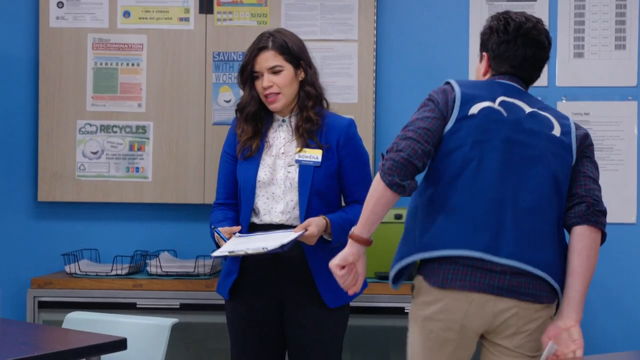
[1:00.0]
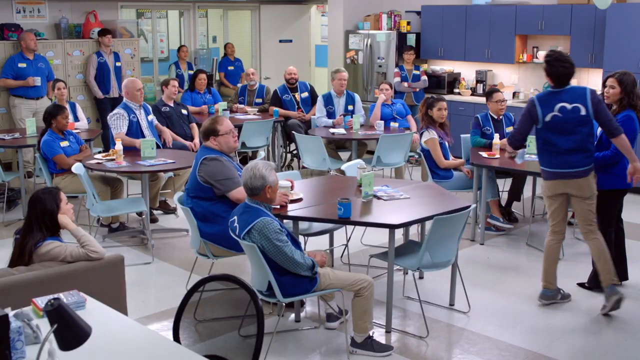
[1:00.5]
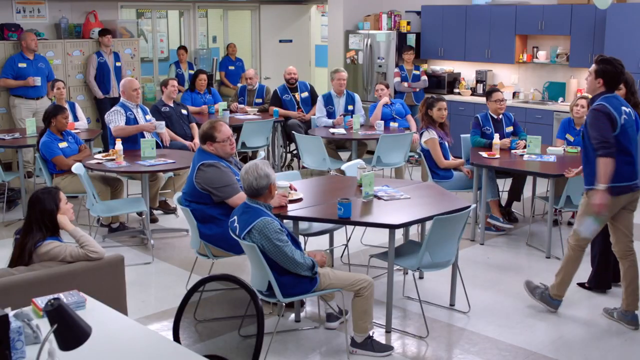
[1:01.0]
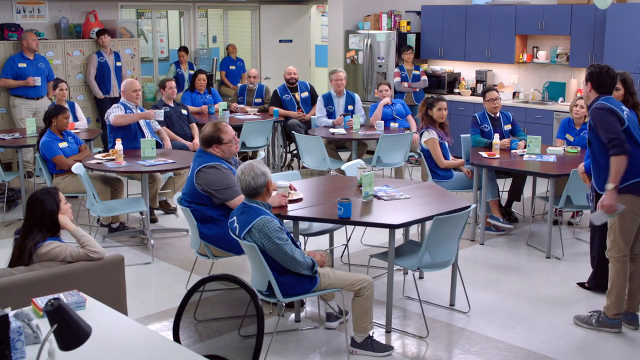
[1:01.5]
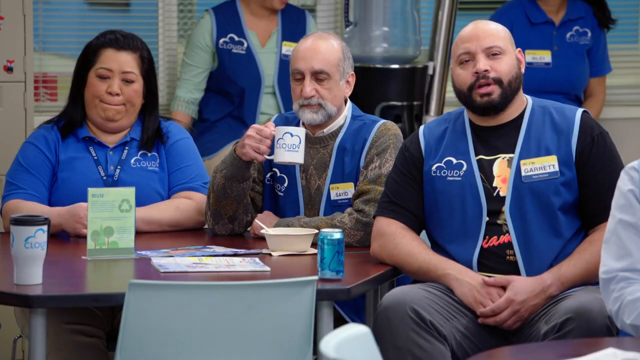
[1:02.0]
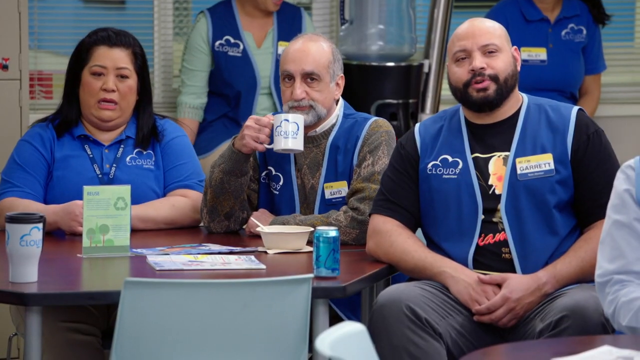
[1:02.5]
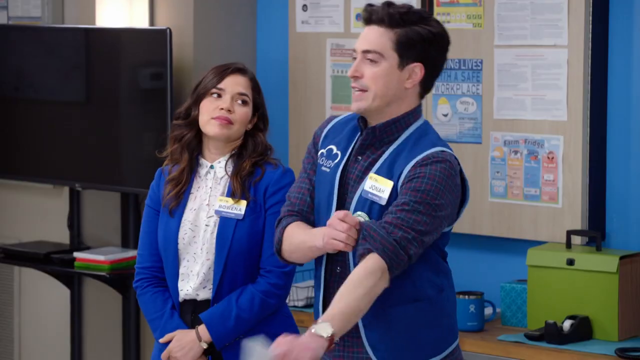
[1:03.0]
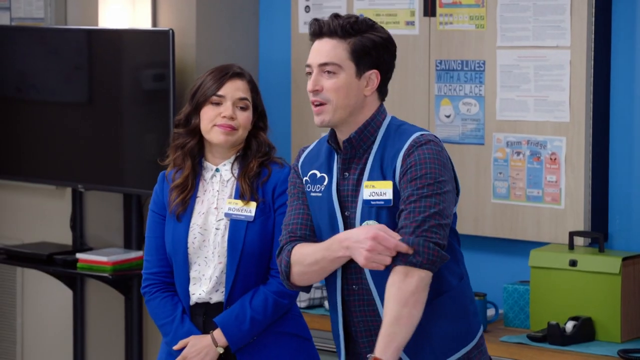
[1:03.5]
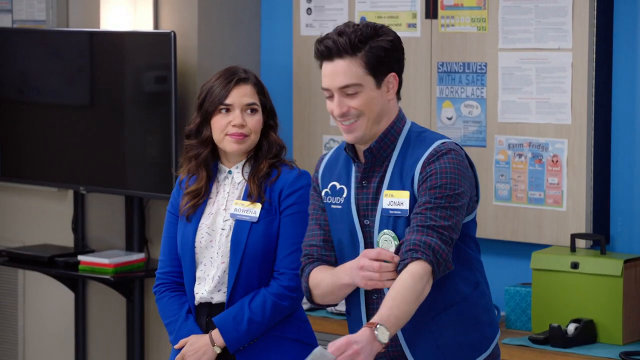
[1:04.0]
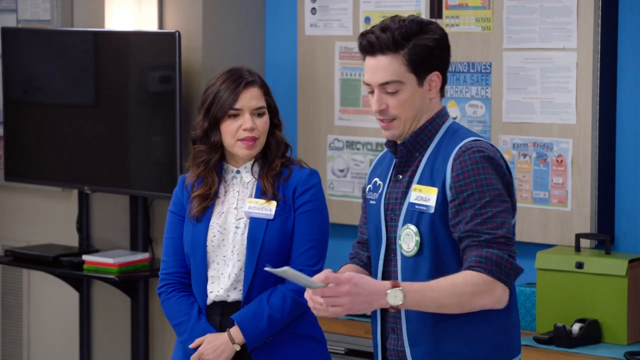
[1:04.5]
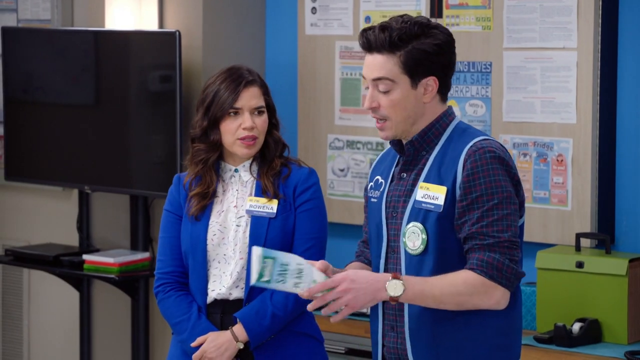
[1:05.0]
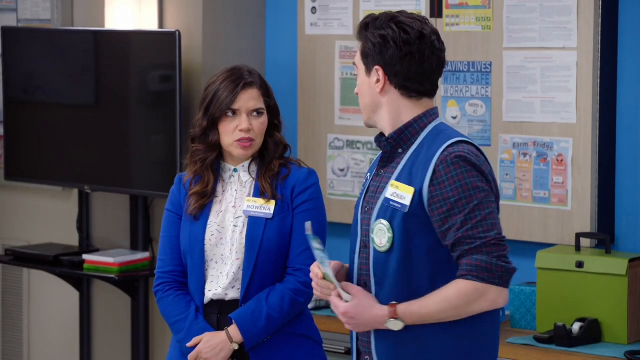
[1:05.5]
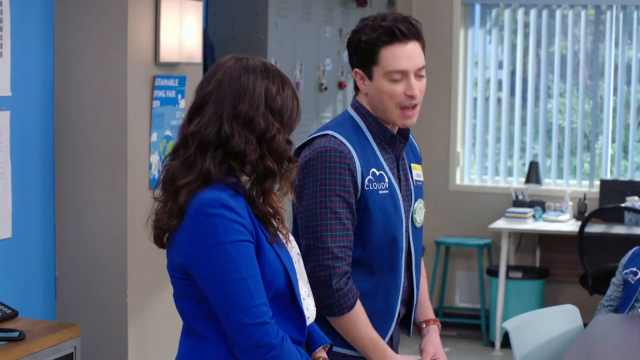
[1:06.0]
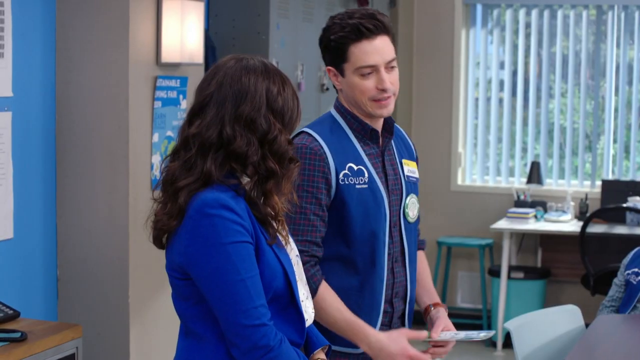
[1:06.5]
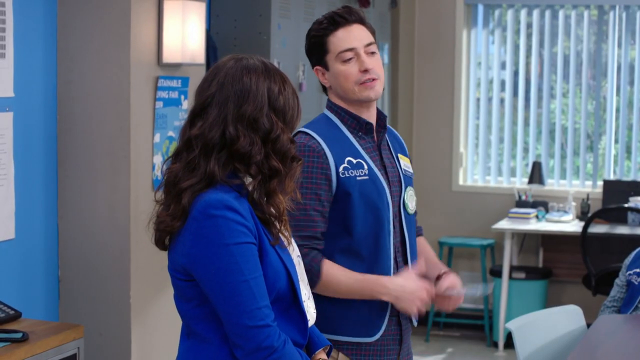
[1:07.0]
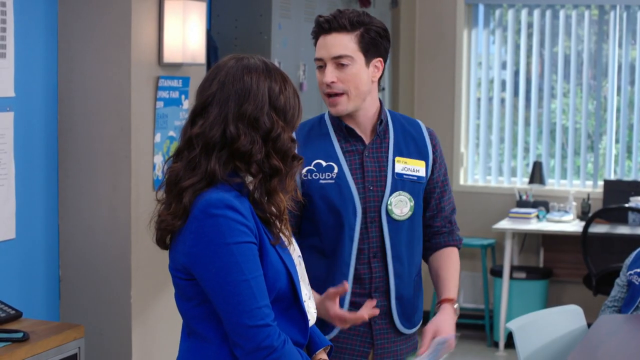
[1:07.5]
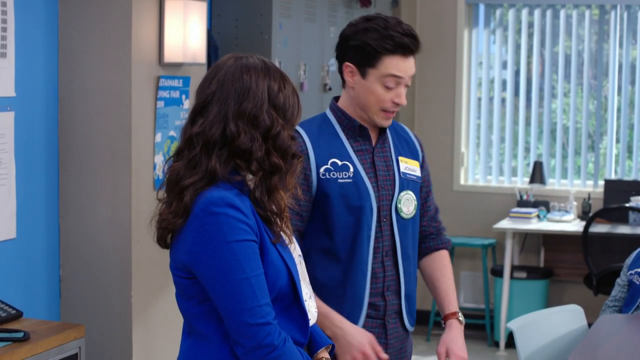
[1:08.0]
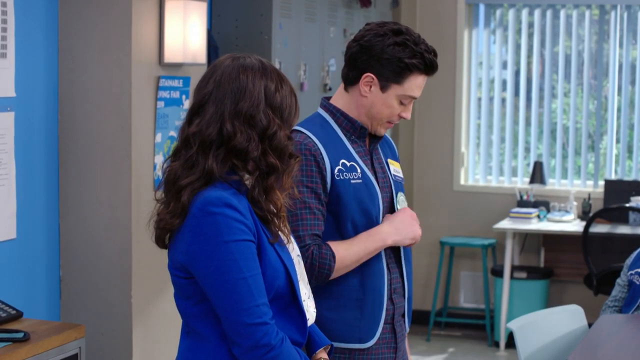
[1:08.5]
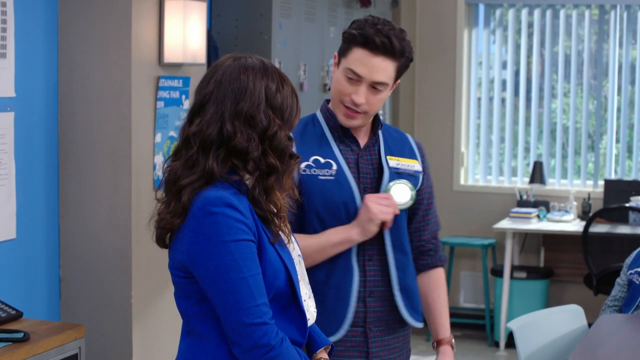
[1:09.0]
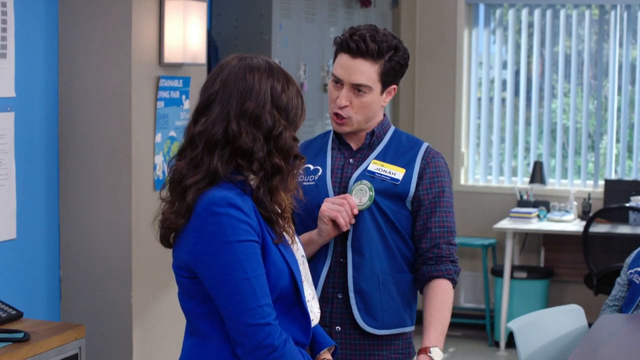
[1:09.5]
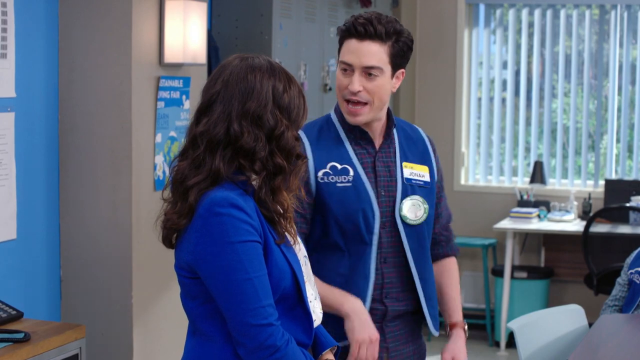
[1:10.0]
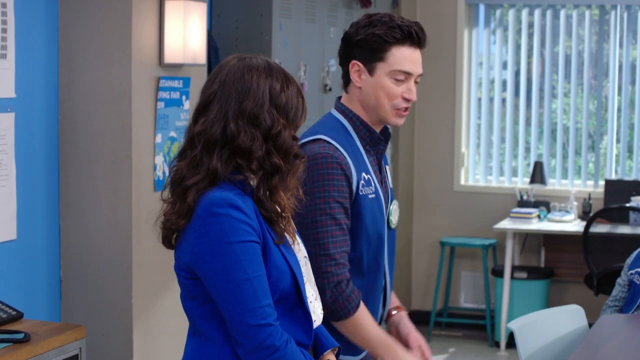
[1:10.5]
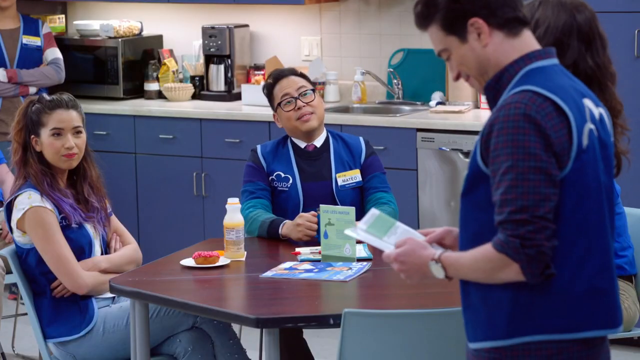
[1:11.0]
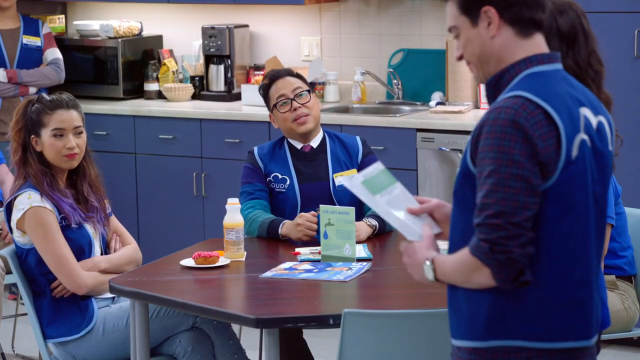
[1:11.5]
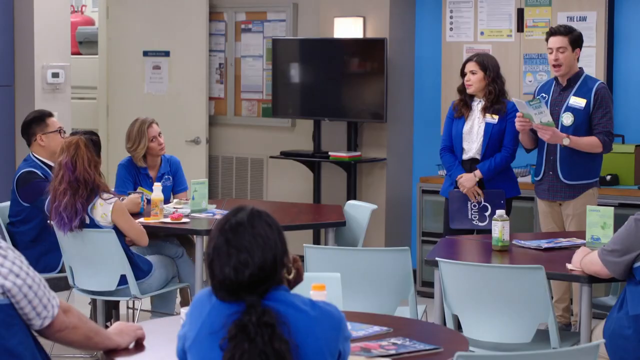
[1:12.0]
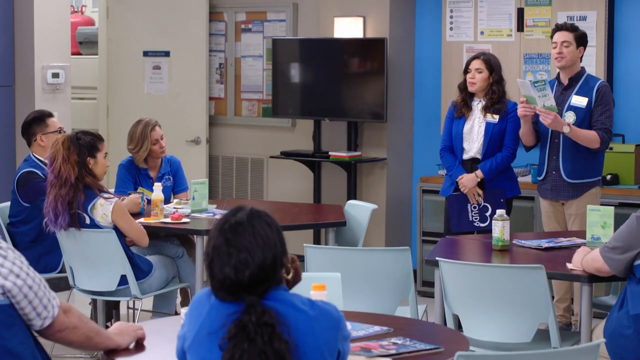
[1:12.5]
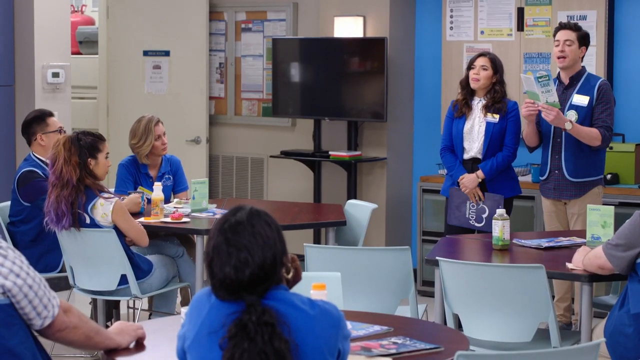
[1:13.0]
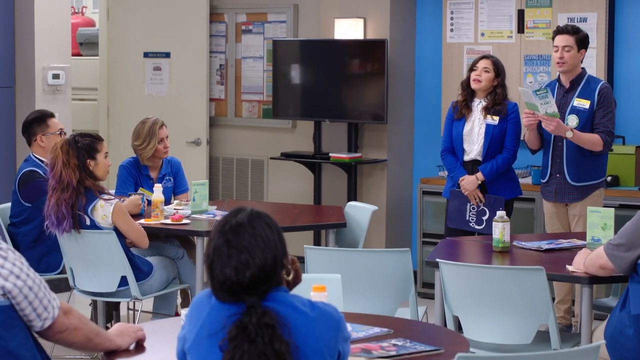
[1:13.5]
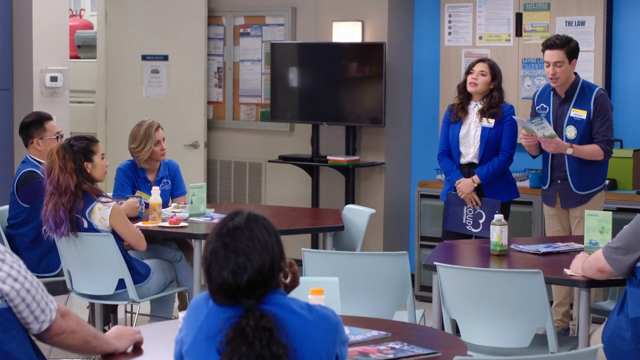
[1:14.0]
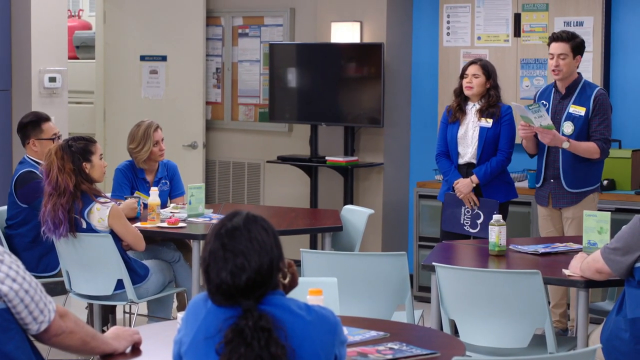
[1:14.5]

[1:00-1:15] A man who was sitting at the front of the room stands up and walks over to a formal lady standing at the front. The scene cuts to the seated audience, where a man at the back makes a comment. It then cuts back to the two standing at the front as the primary focus; the man comments back to the person at the back while rolling up his sleeves. The lady to his left makes a comment, and the camera shifts to her left side, facing the man as he shows her the green badge on his blue vest. The shot cuts from behind them to a man with glasses sitting on the right side of the front of the room making a remark, then to both people standing at the front with their faces toward the camera.